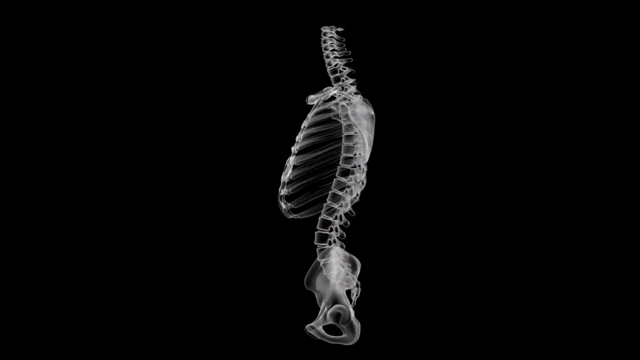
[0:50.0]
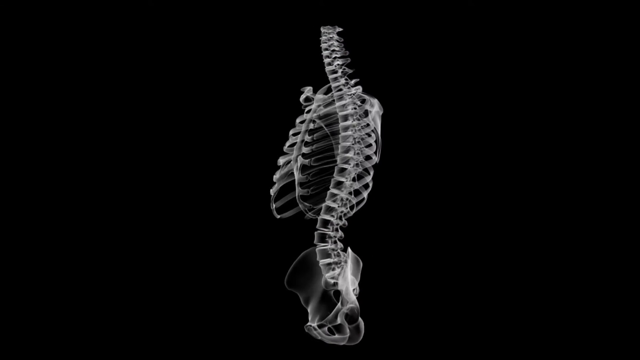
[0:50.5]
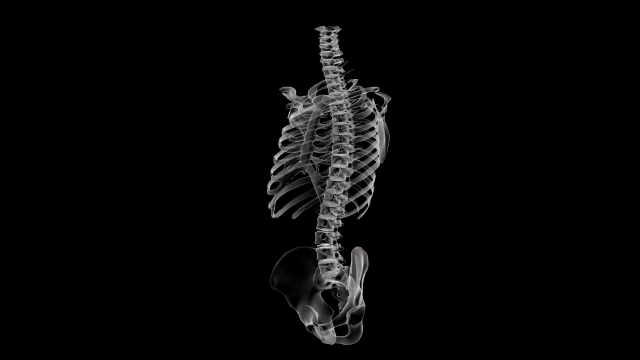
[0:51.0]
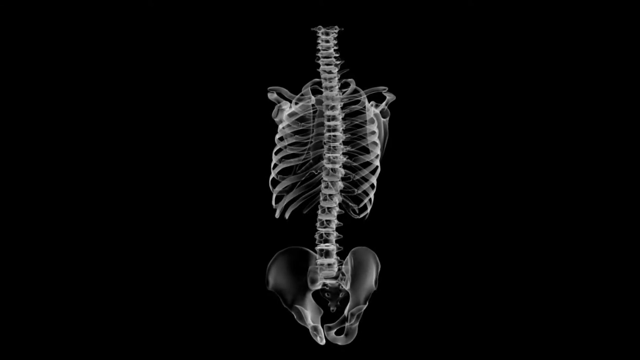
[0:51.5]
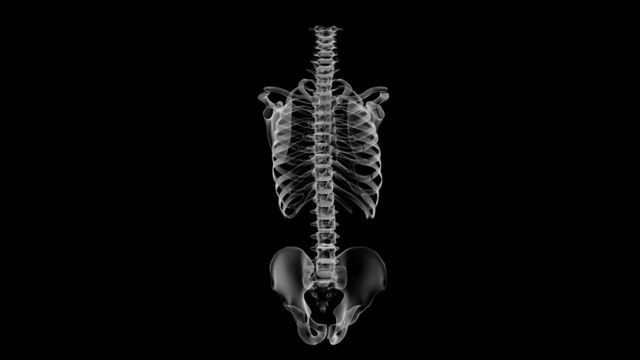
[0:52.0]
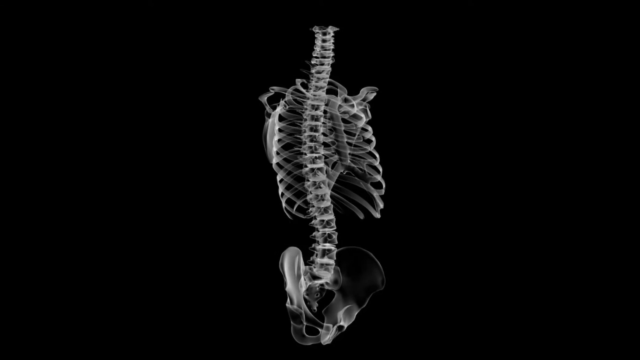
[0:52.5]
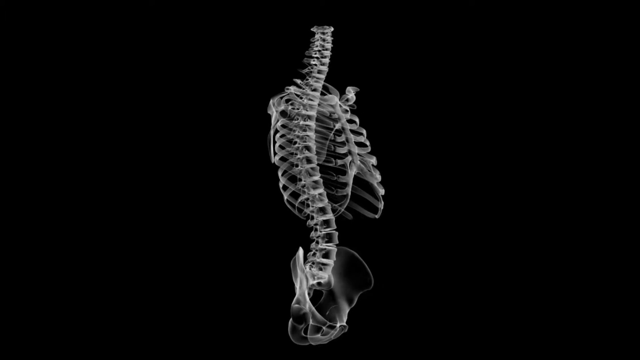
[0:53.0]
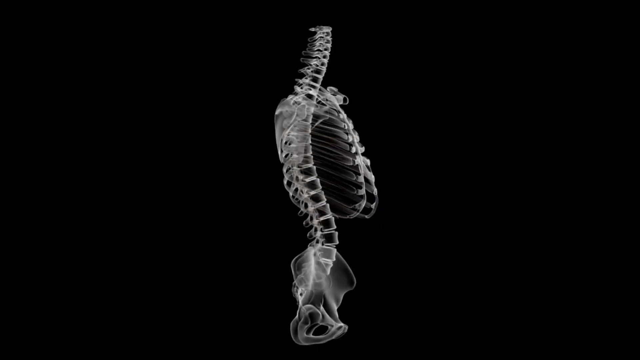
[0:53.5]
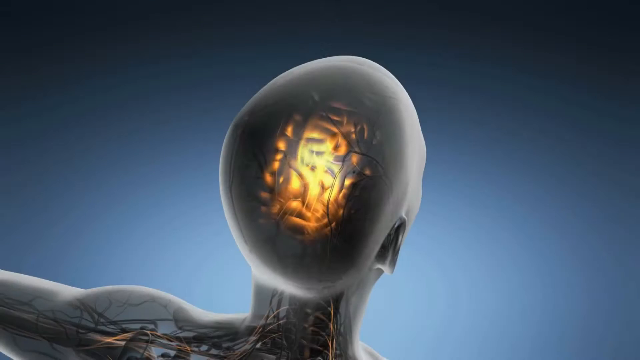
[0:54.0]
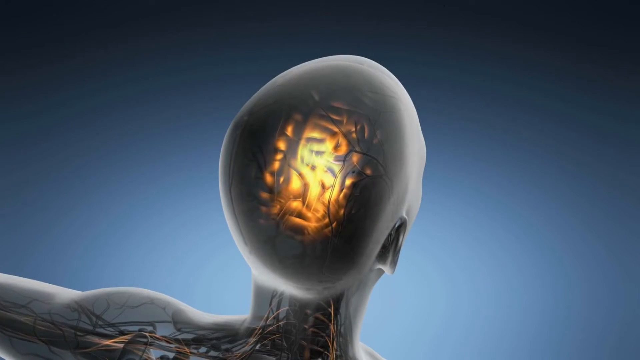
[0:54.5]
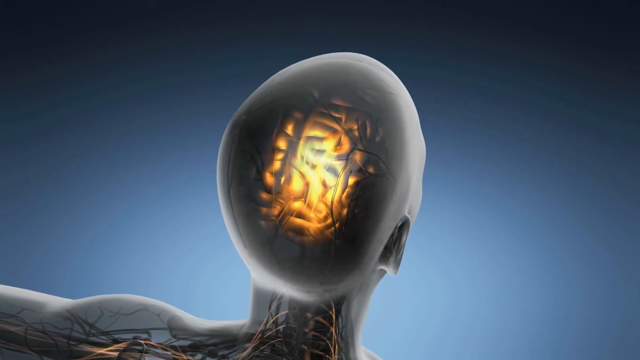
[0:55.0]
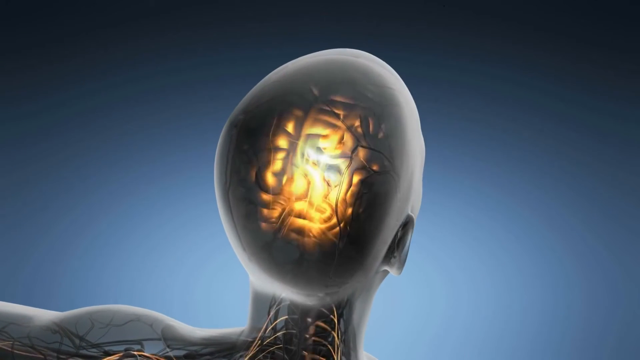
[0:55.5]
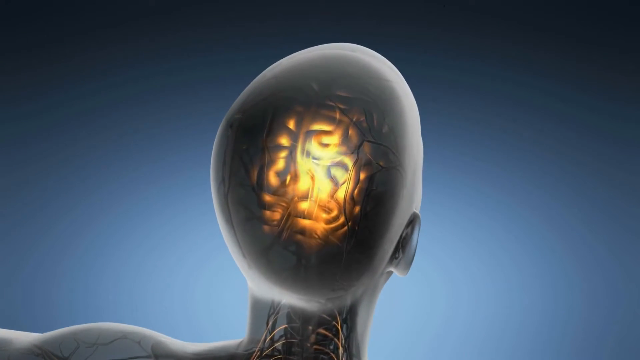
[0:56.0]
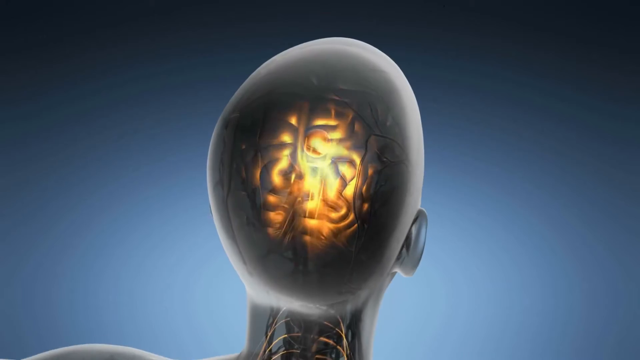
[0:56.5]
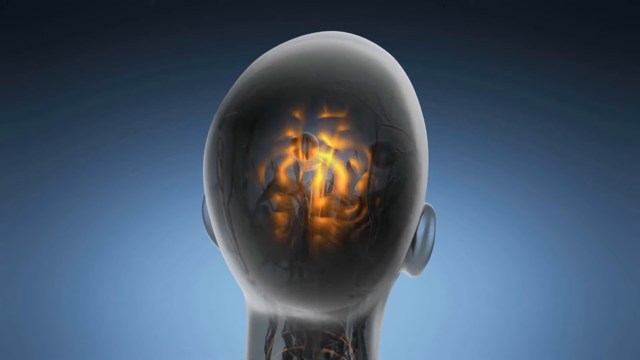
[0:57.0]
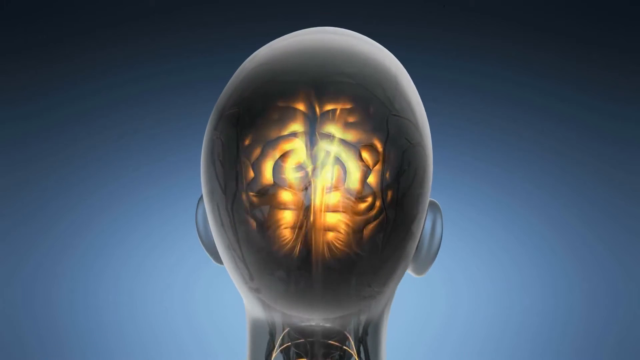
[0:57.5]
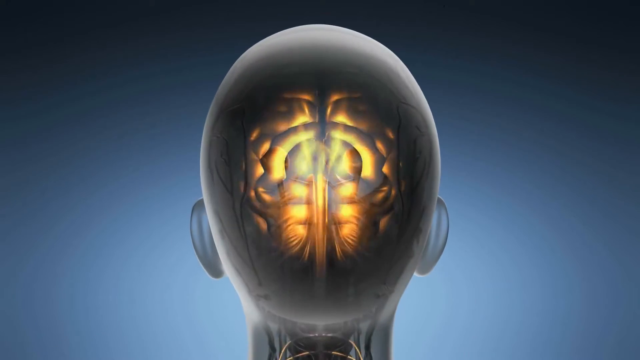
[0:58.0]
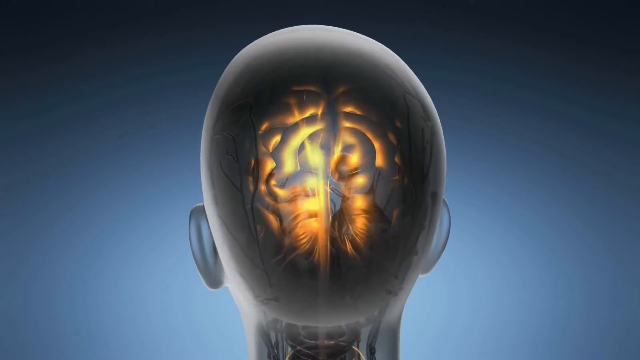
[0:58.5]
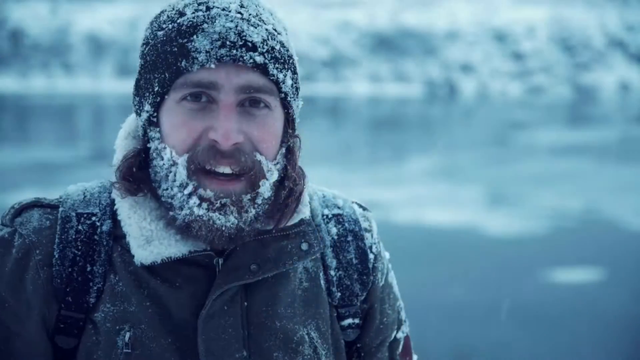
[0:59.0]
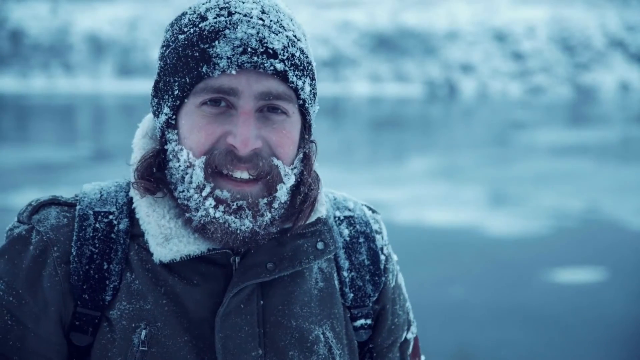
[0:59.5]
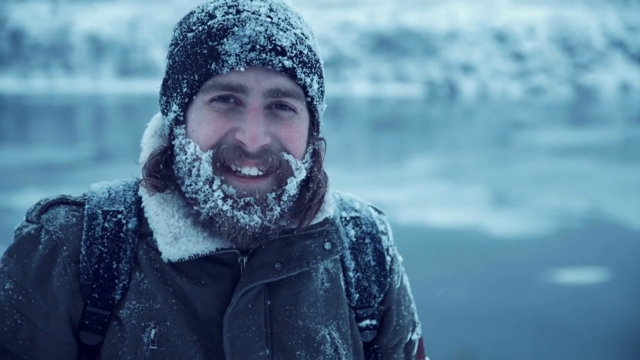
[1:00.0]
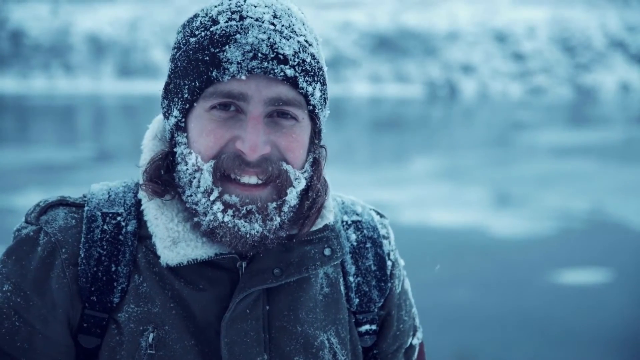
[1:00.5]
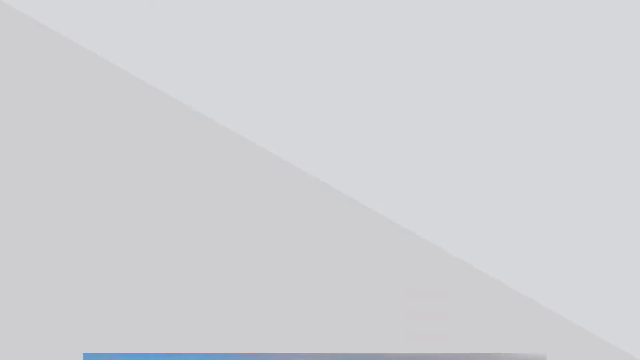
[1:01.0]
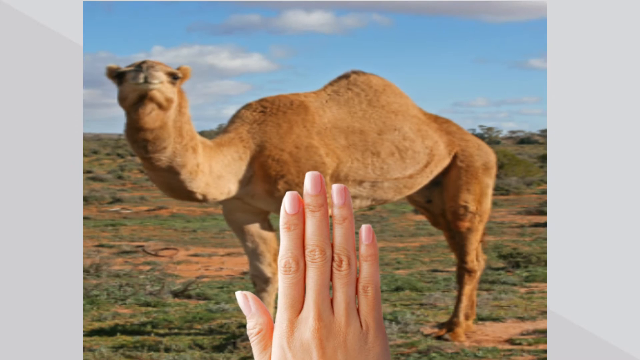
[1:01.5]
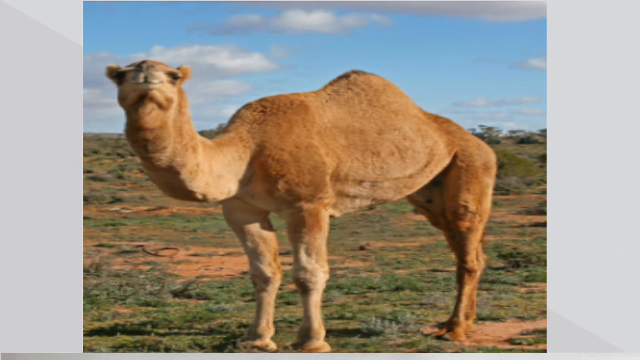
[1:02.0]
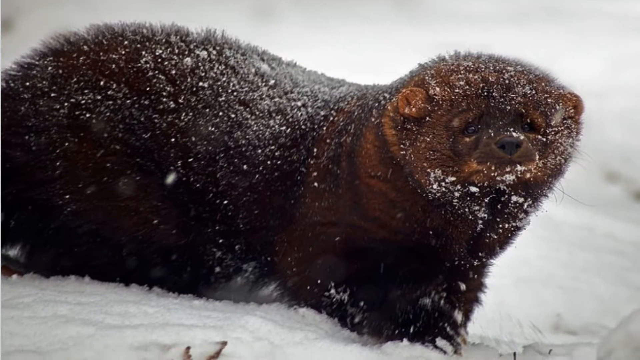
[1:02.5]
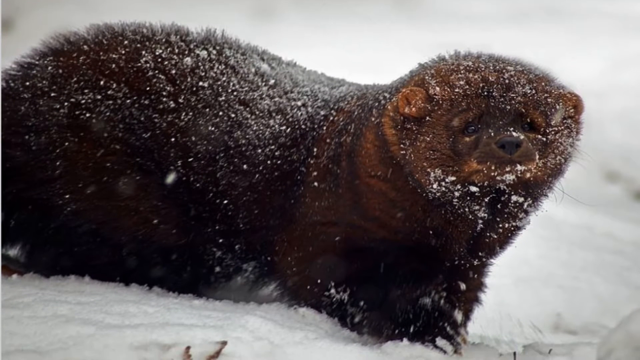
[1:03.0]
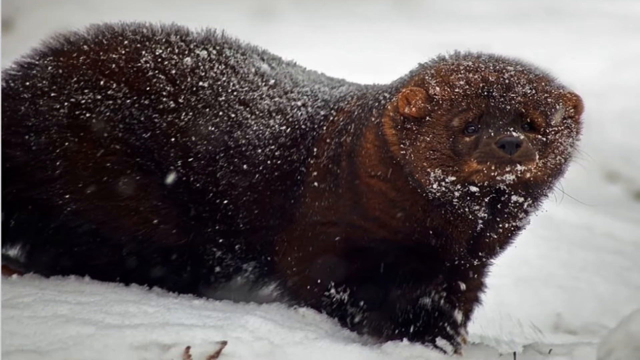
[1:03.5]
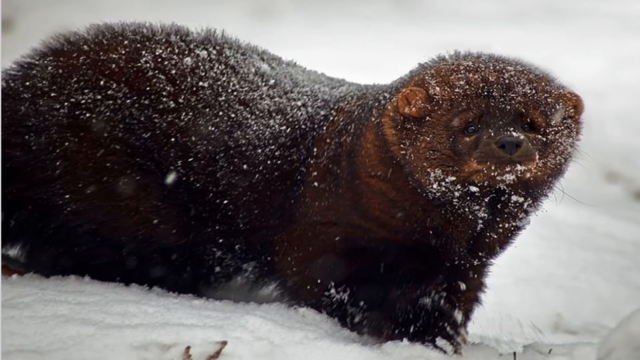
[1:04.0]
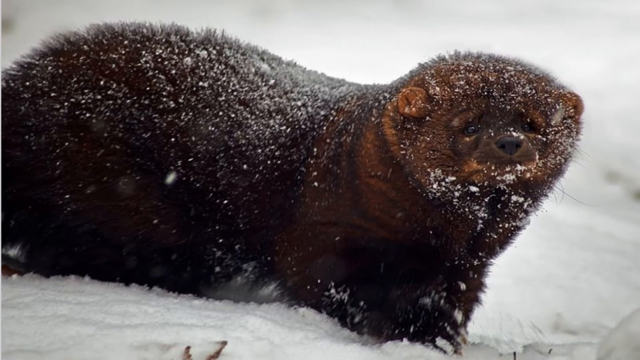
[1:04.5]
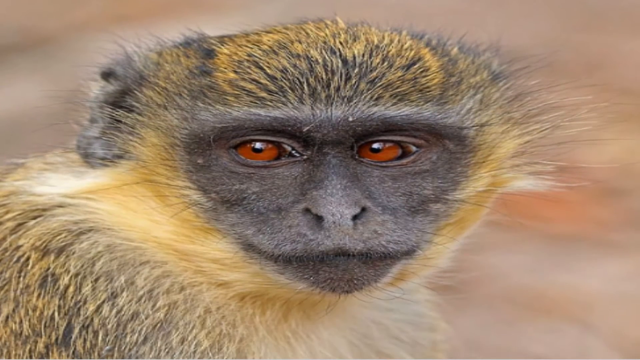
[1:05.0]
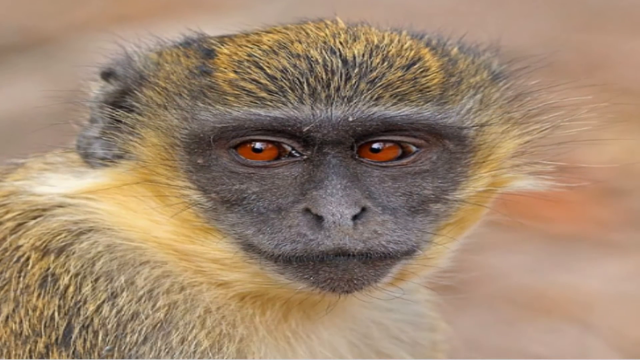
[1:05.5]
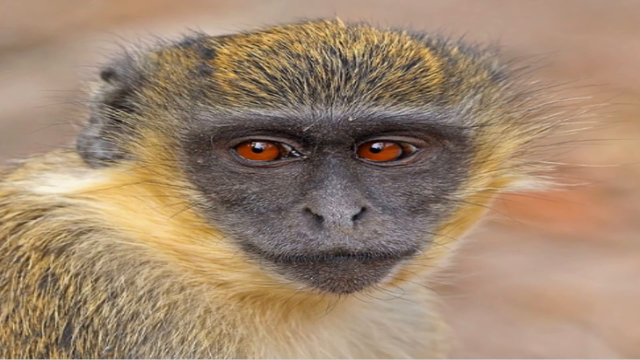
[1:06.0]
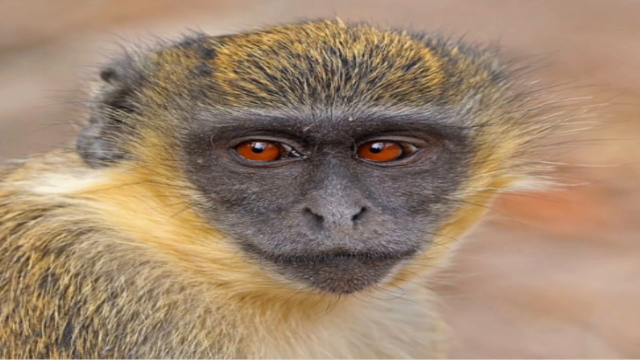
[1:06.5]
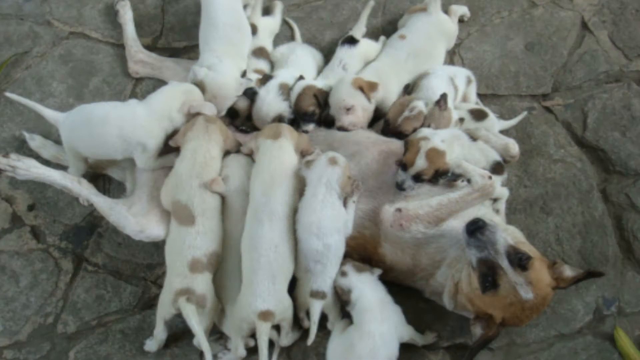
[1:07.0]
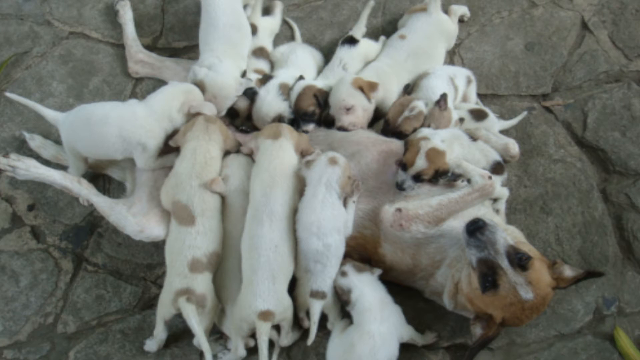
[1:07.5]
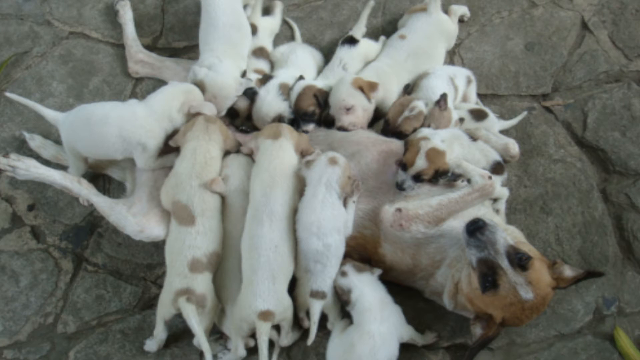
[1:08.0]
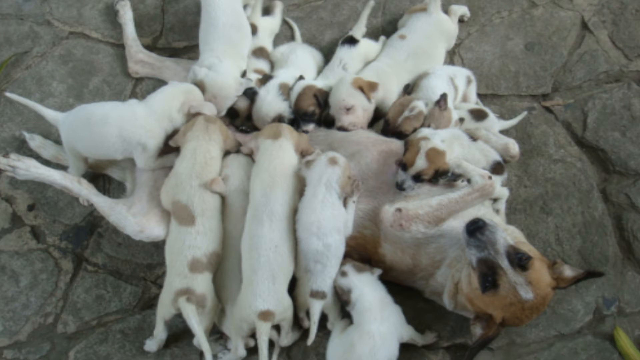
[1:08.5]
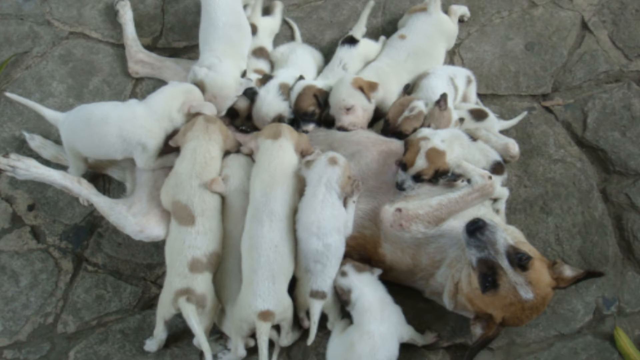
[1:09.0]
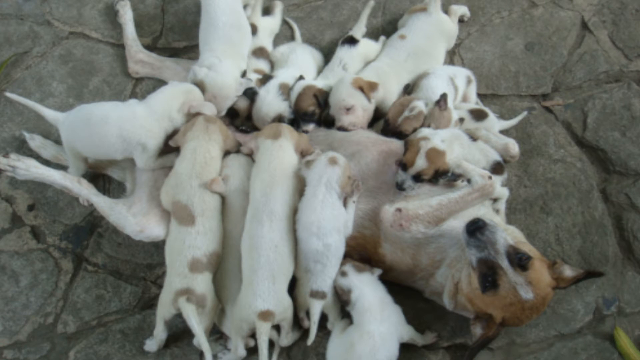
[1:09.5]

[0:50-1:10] A human skeleton is shown, mostly the chest, arms and neck. Next comes what seems to be a scan of the brain, with a functional part highlighted in yellow. The other 400 species are then shown. The abdominal part of the body follows. Other animals appear, such as a monkey and a dog. A dog lies on the ground with about fifteen pups. A white man wearing a coat is somewhere in snowy mountains. A camel and other animals are also shown in a snowy environment.